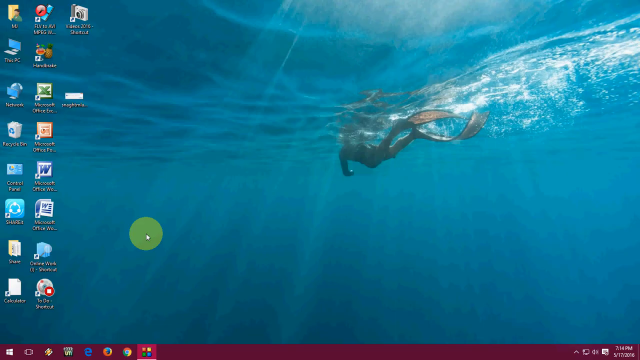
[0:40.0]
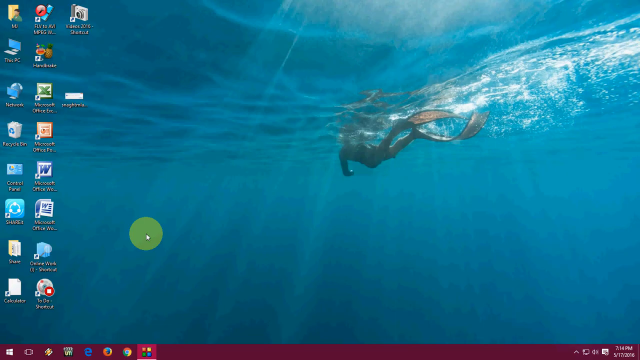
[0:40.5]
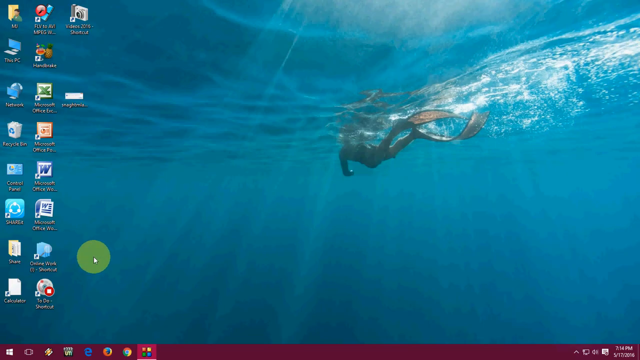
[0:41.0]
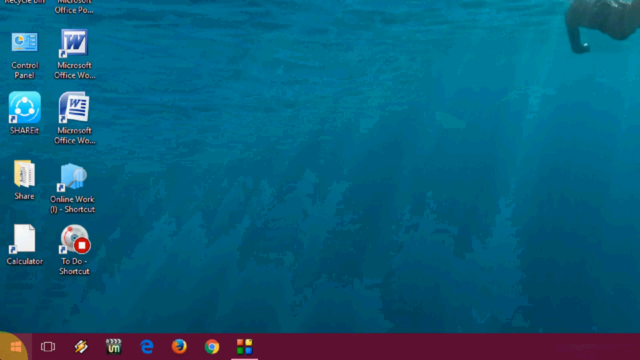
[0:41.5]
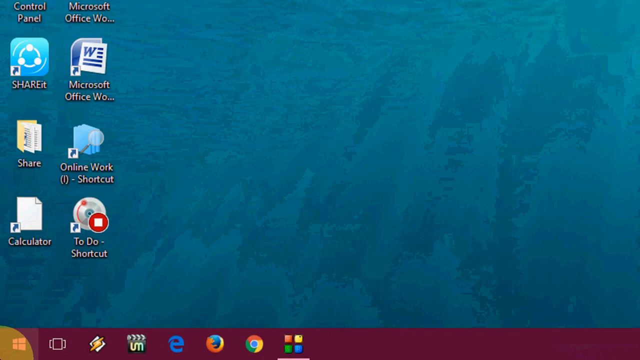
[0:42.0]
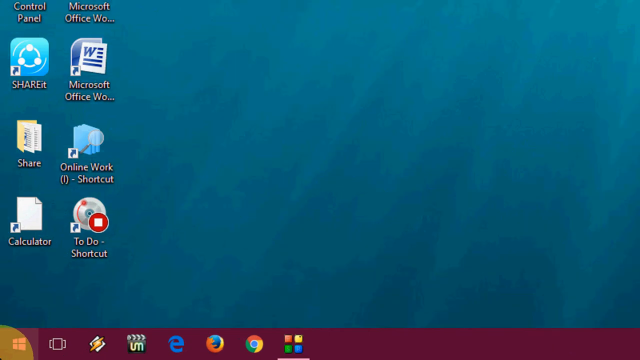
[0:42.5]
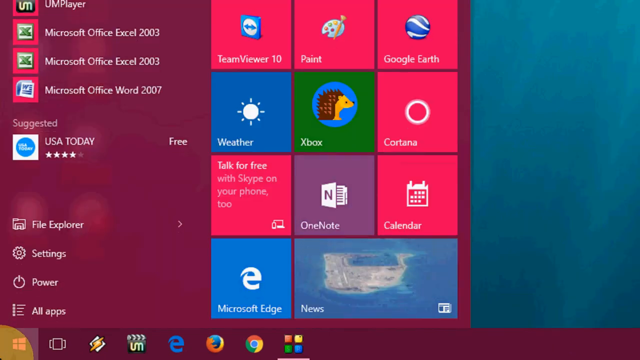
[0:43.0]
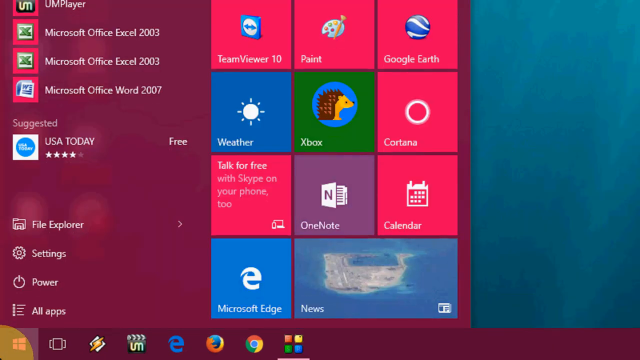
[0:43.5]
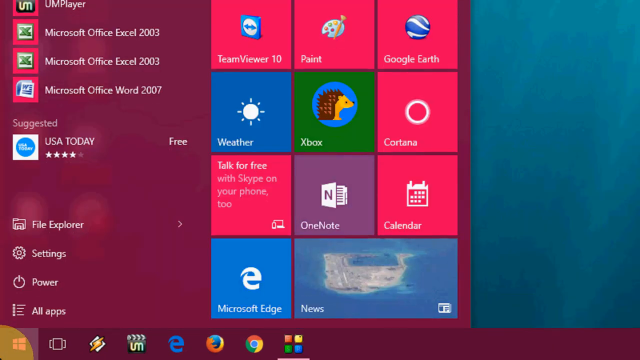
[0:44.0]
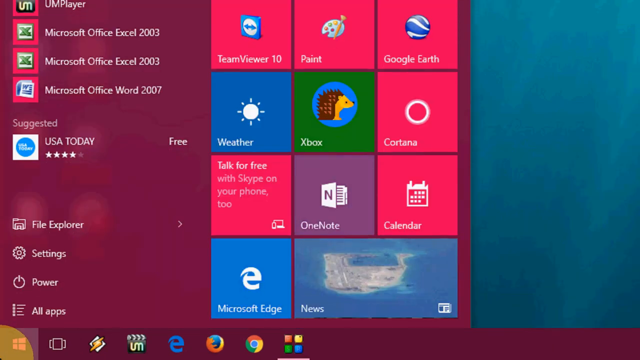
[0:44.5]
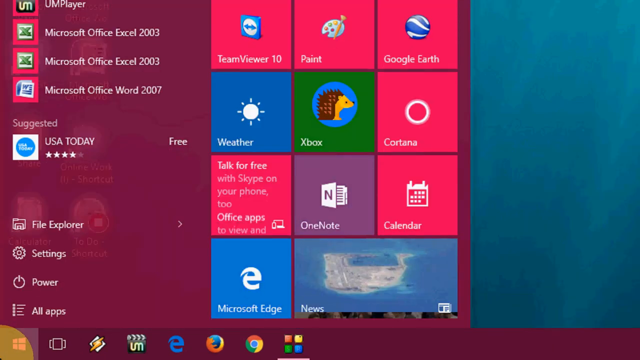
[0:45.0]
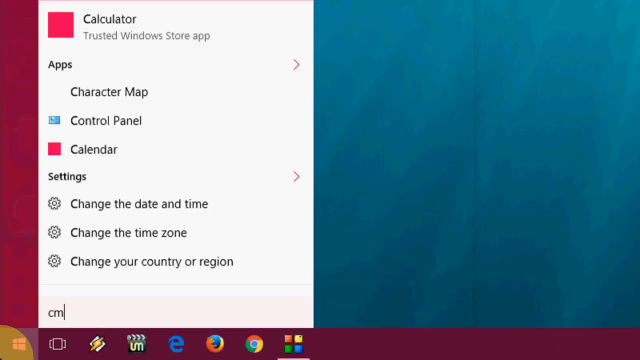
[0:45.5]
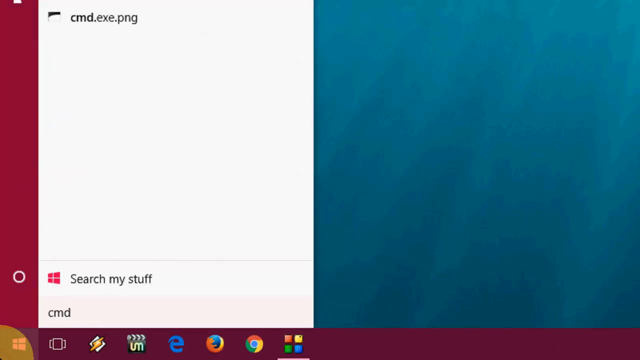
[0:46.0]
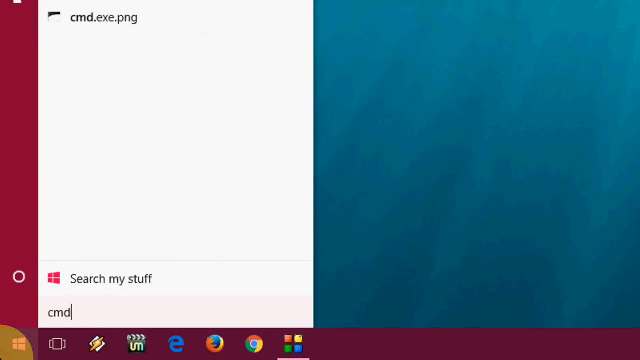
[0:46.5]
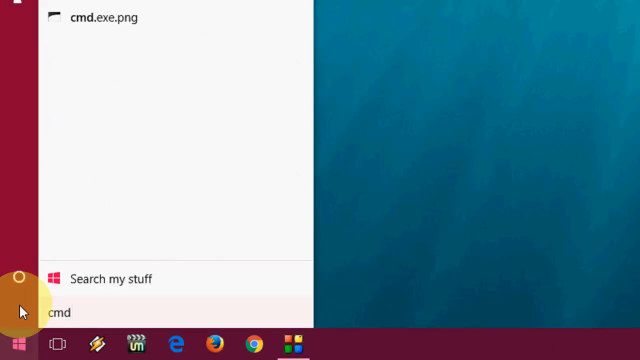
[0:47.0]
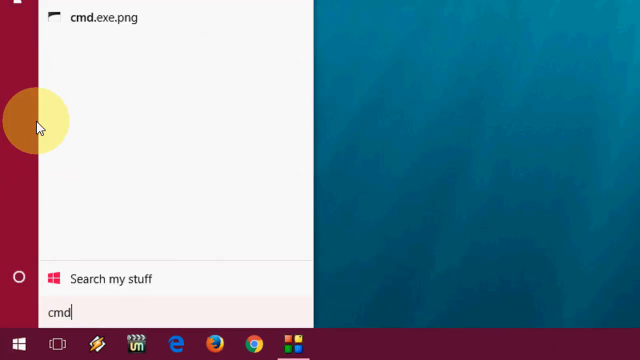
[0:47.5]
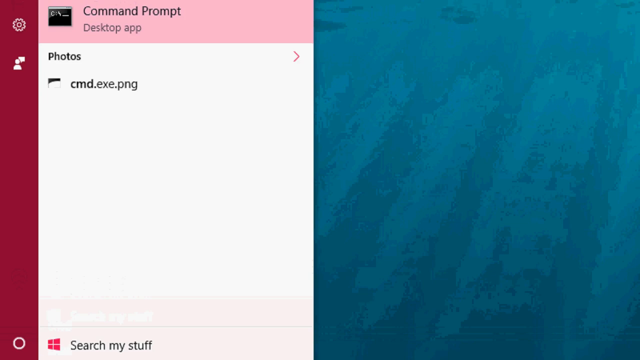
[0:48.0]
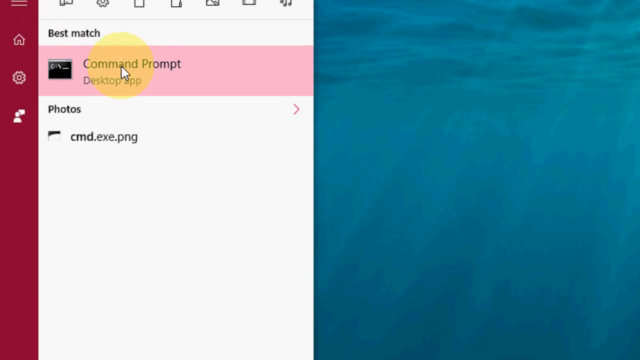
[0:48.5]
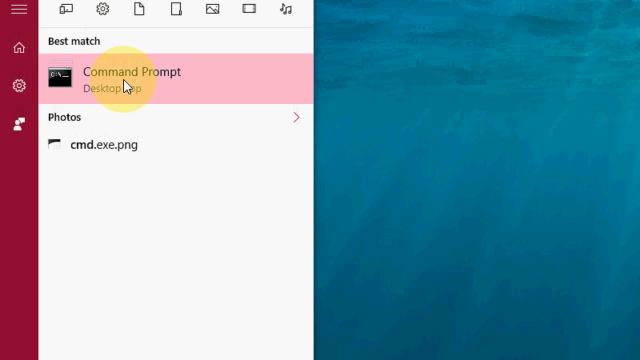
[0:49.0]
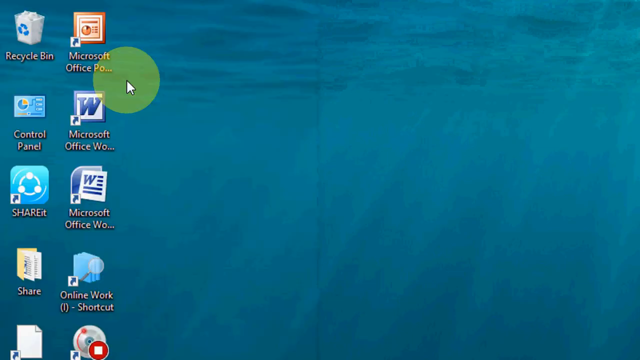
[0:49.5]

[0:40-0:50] The view returns to the home screen with the swimmer in flippers in the background, and zooms in on one of the desktop applications, labeled "to do" shortcut. It does not select that application; instead the Windows logo at the bottom left is selected and the menu pops up, showing TeamViewer 10, Paint, Google Earth, Weather, Xbox, Cortana, OneNote and Calendar. A search for "command" is made, and the best-match result, Command Prompt, is selected.